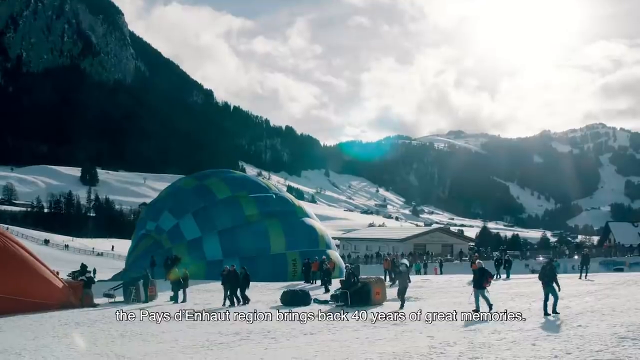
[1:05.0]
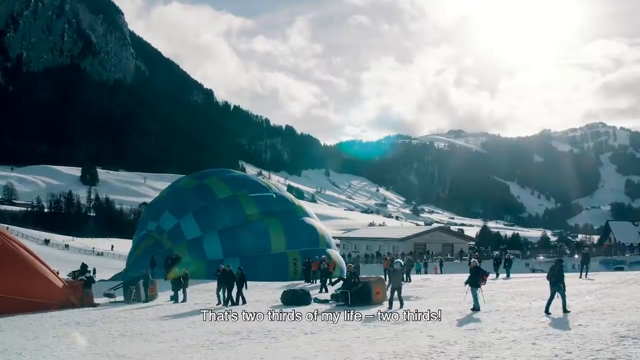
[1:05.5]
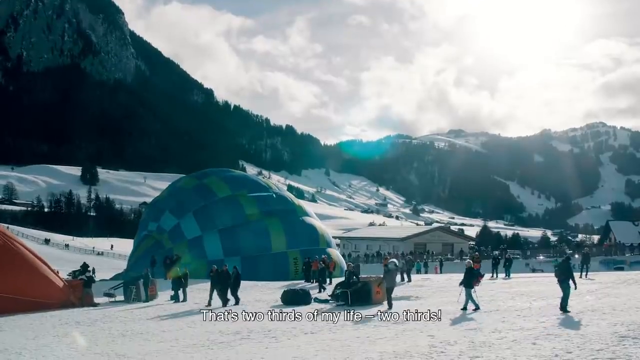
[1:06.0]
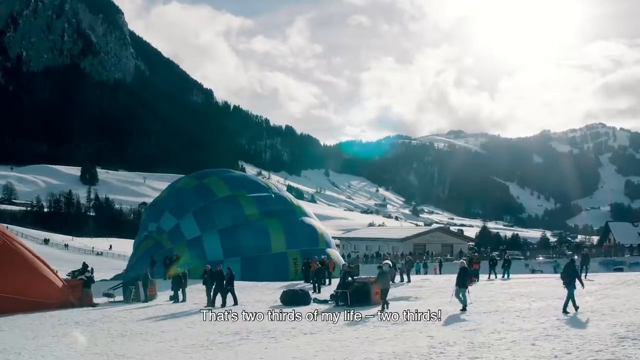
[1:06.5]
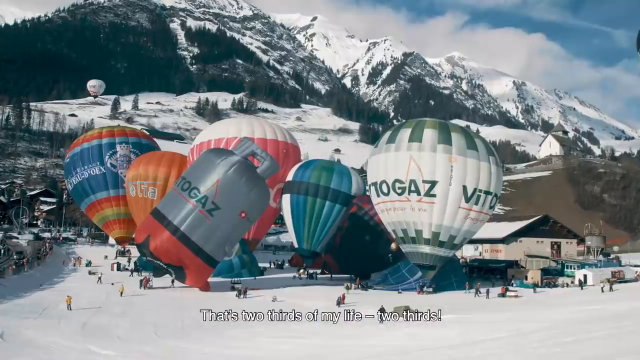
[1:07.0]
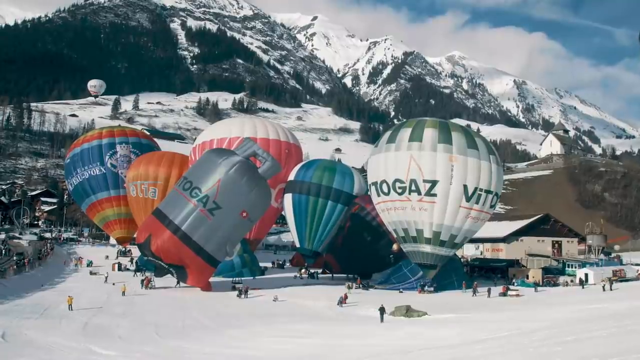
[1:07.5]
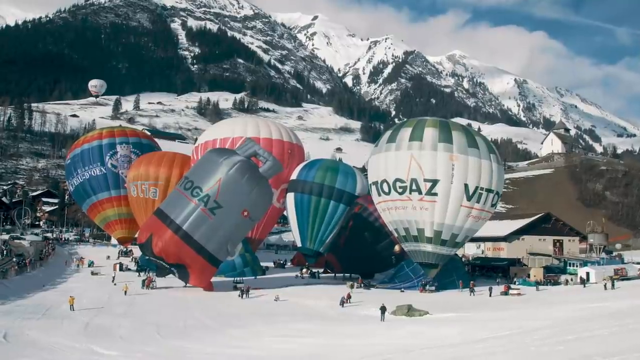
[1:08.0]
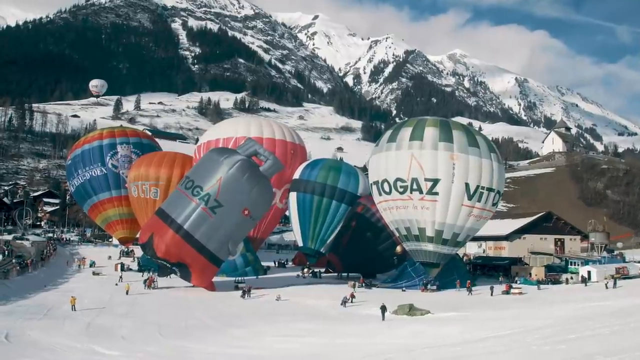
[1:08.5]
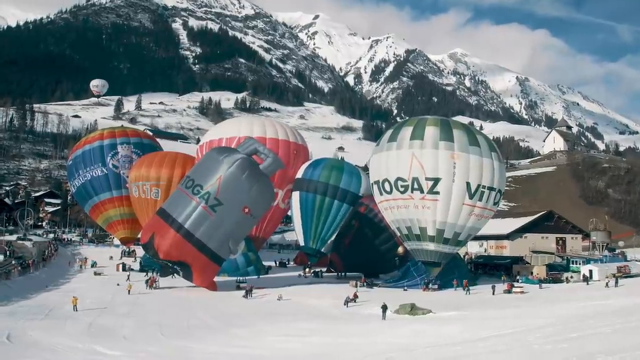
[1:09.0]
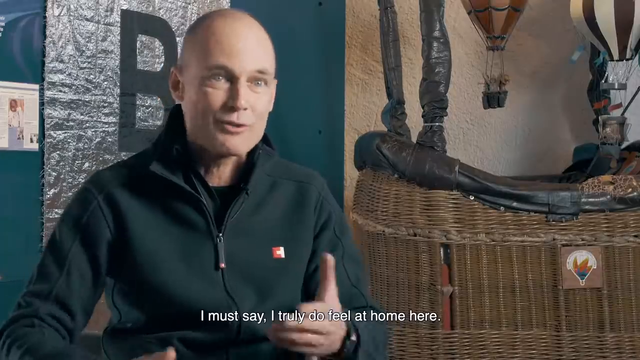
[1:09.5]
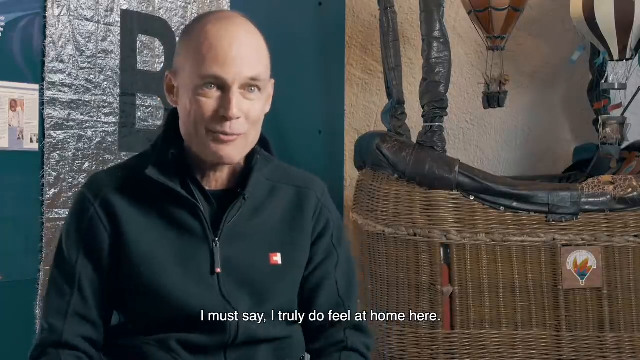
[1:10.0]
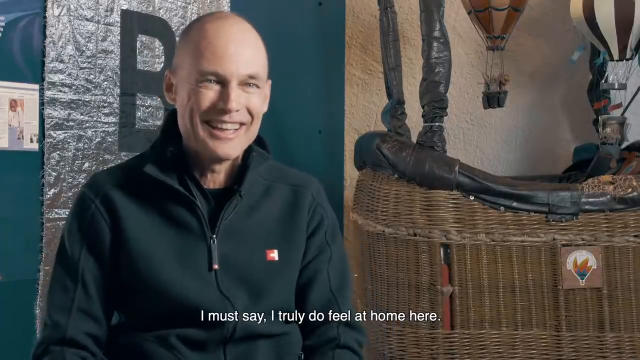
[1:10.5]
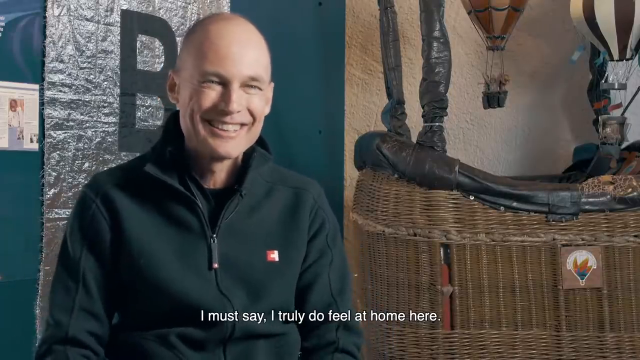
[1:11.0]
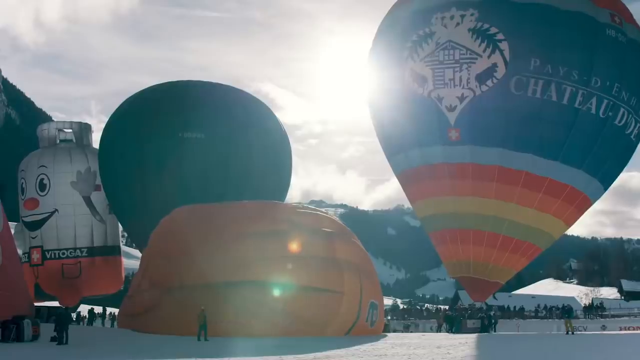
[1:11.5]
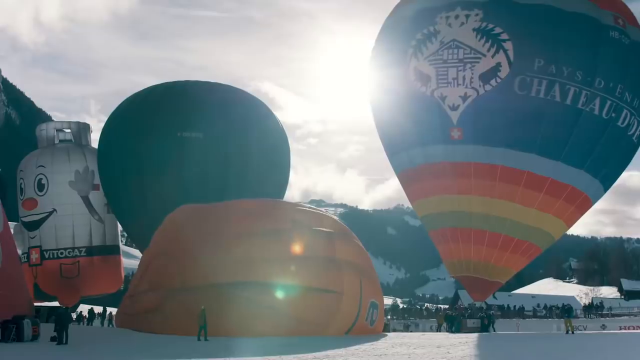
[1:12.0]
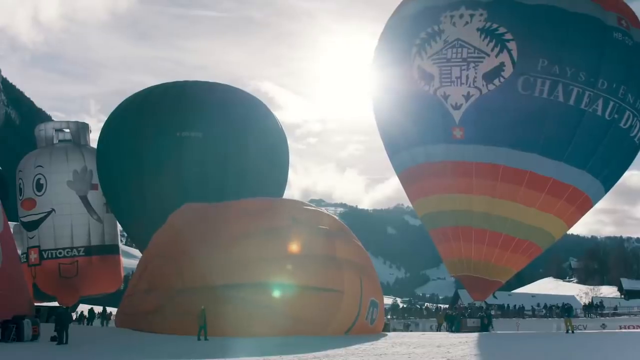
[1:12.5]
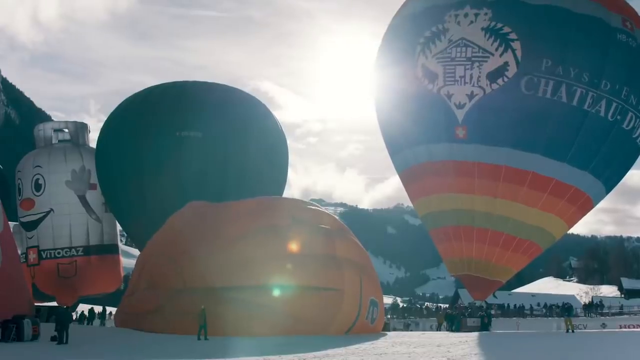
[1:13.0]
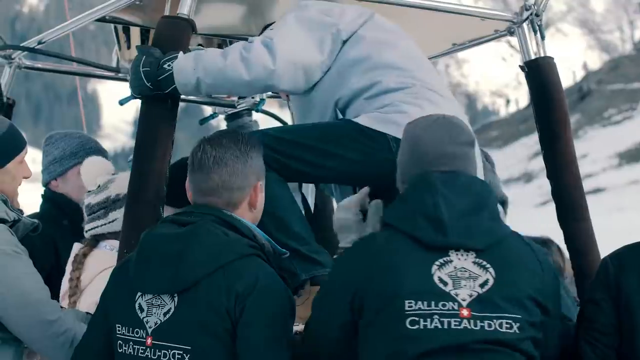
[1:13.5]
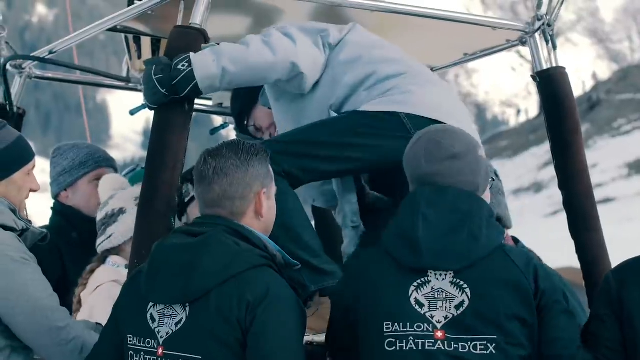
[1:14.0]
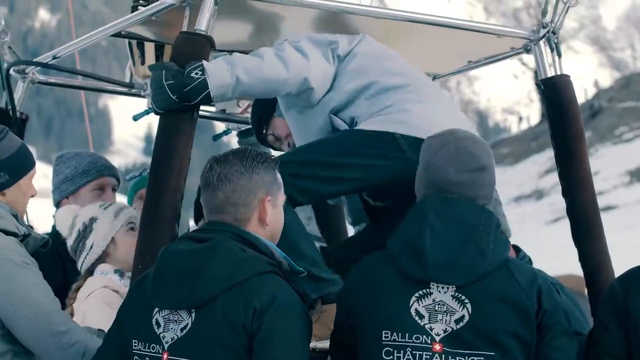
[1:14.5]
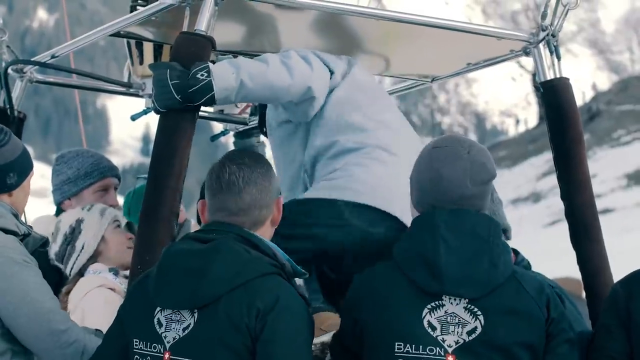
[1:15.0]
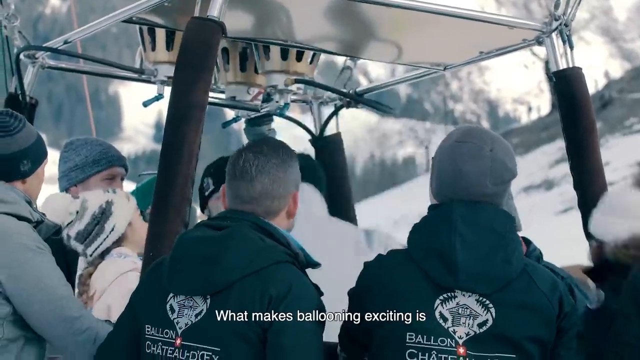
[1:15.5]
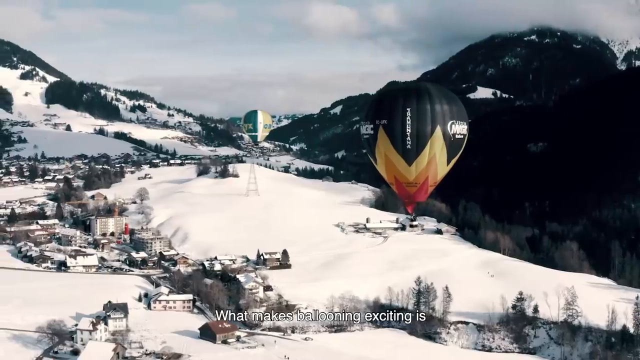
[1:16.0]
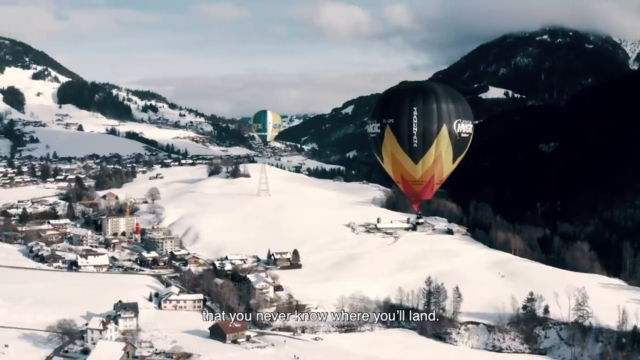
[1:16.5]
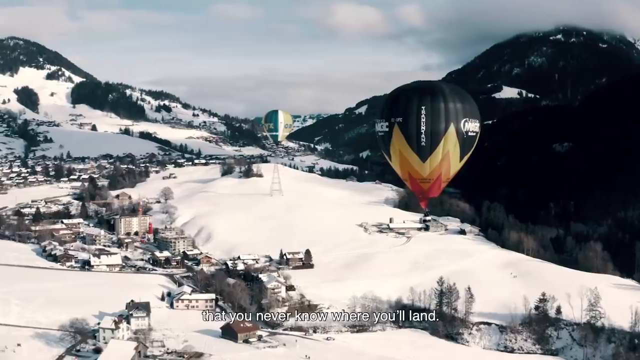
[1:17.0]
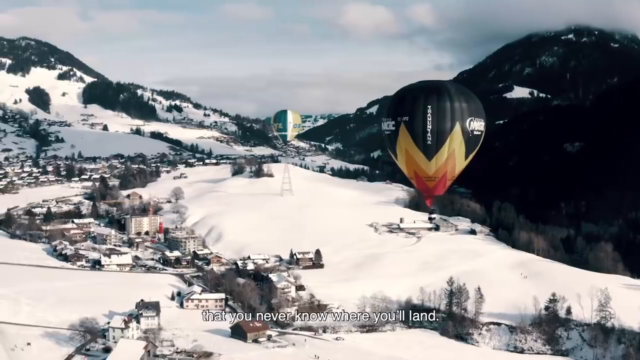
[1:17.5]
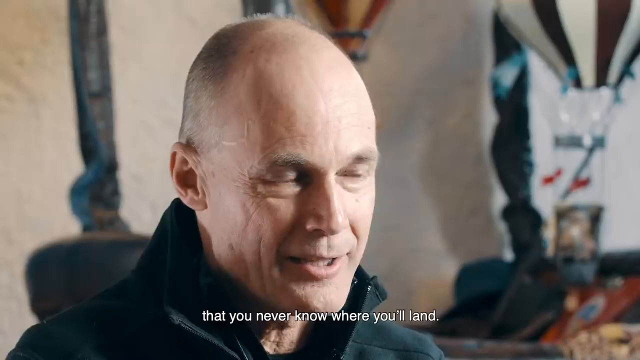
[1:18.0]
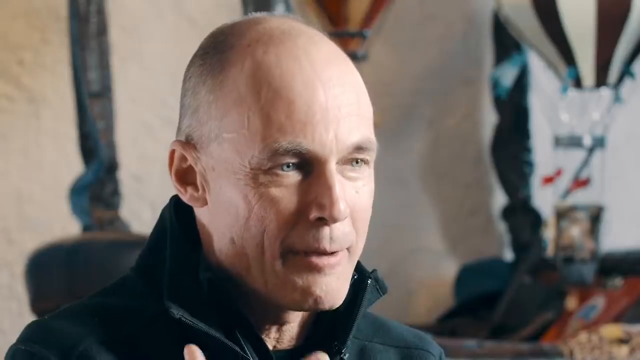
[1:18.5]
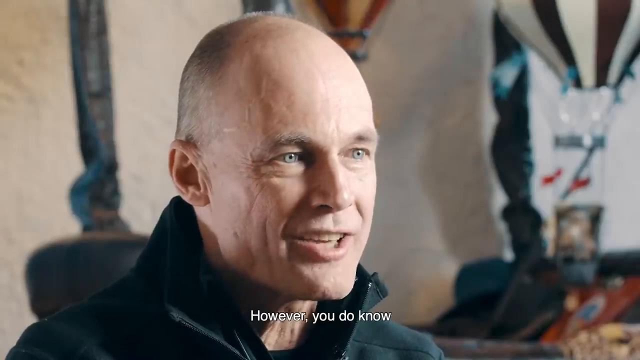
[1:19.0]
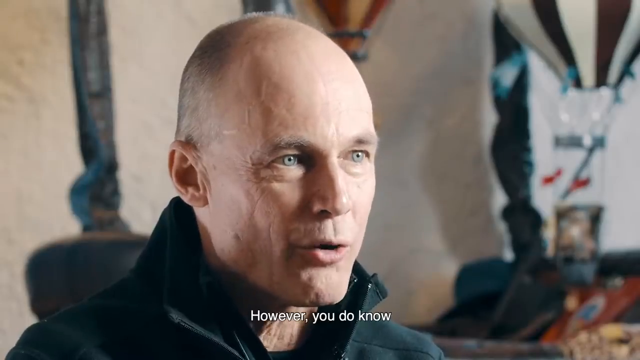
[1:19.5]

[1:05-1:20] Balloons are standing next to each other, and some of them seem to be starting to be deflated. The people look tiny next to the giant balloons. Some balloons have funny faces on them: one looks like a milk carton or a ghost, one looked like a ladybug, and one looks like it has a pill bottle with a brand name on it. People walk around preparing the balloons, with snow and mountains in the background and the sun peeking through the clouds. A black, yellow and red balloon floats off by itself in the distance. The video goes back and forth to the man, who is speaking and laughing and appears to be having a good time. Then some people climb into their balloon.